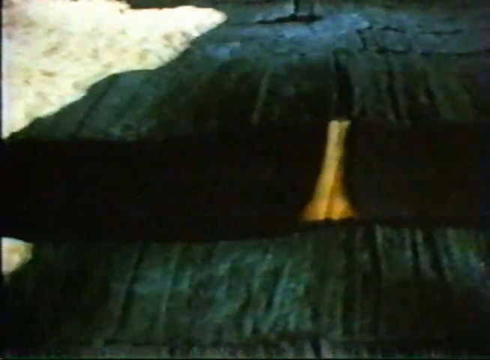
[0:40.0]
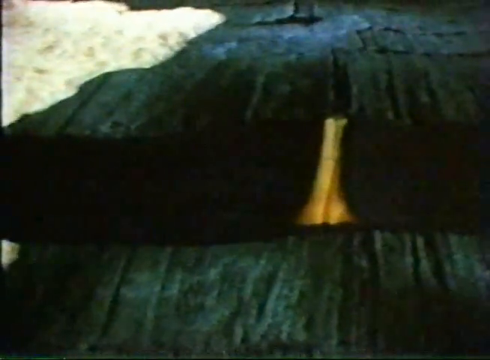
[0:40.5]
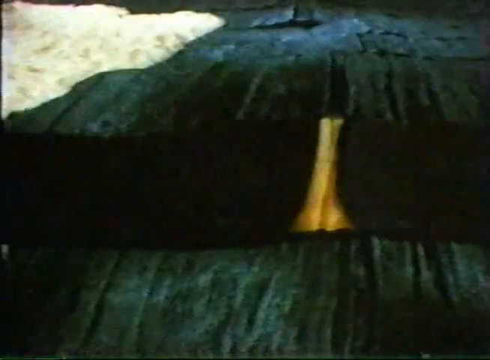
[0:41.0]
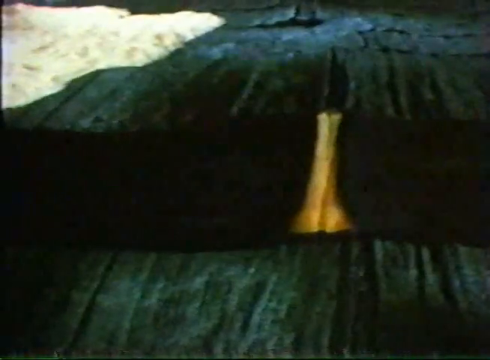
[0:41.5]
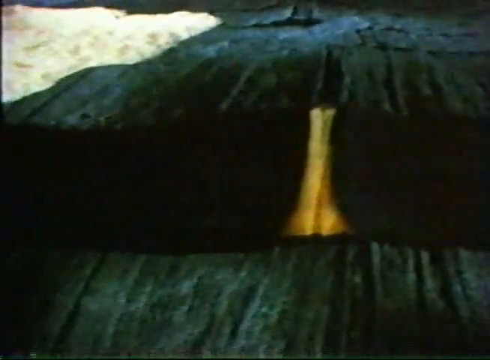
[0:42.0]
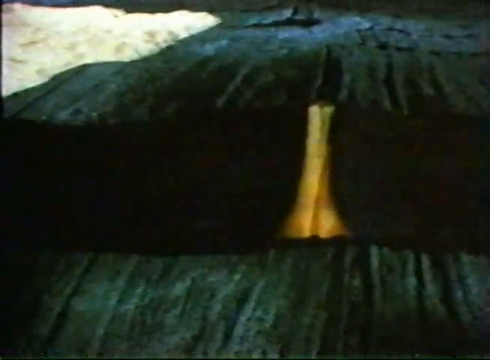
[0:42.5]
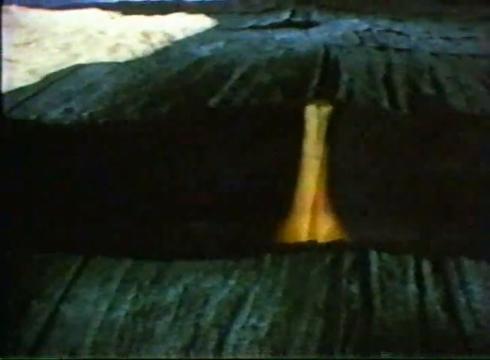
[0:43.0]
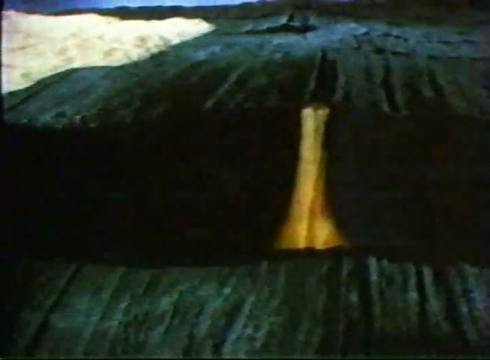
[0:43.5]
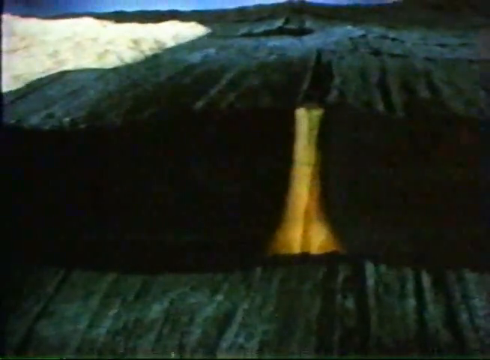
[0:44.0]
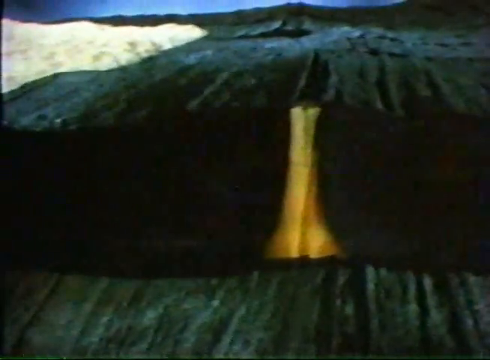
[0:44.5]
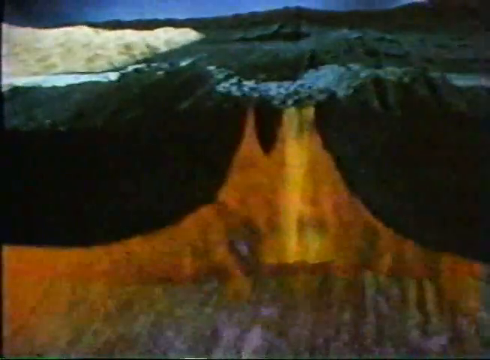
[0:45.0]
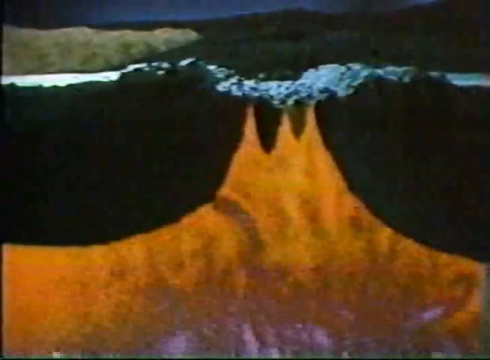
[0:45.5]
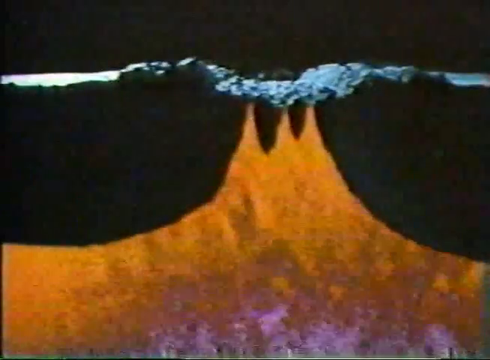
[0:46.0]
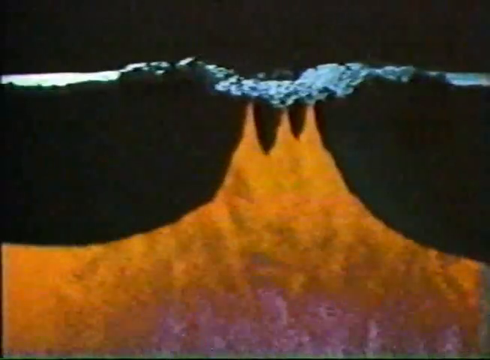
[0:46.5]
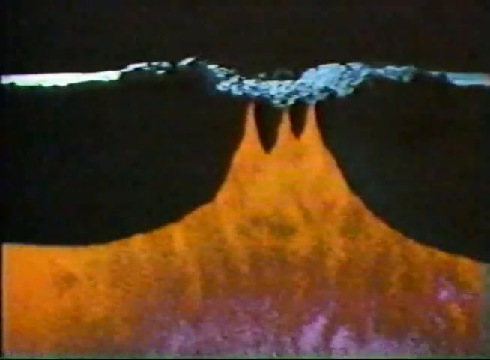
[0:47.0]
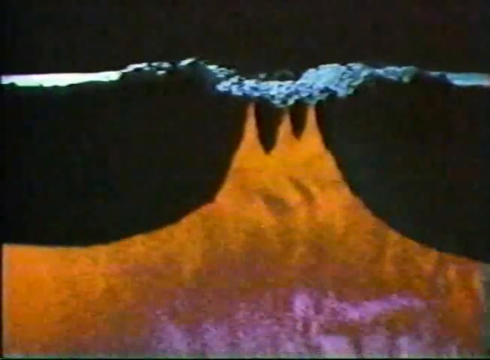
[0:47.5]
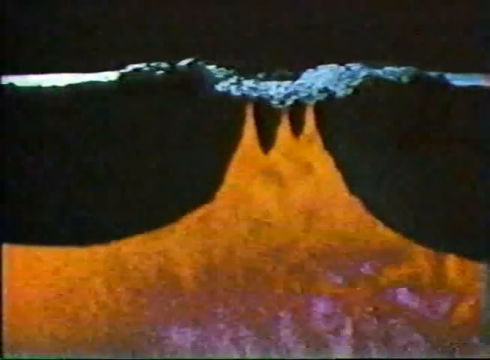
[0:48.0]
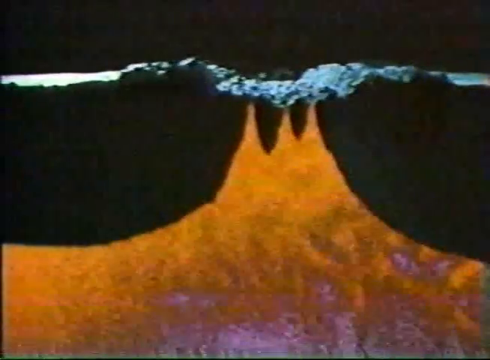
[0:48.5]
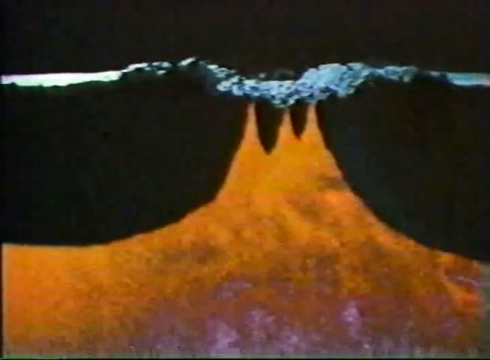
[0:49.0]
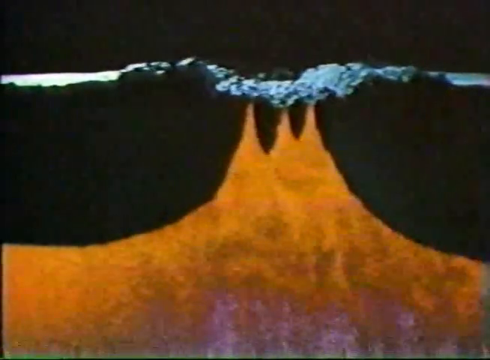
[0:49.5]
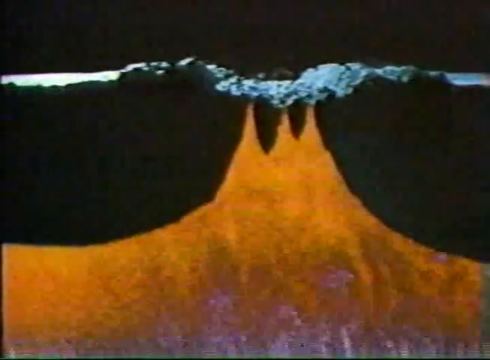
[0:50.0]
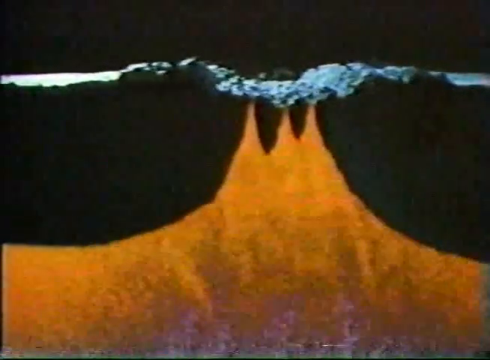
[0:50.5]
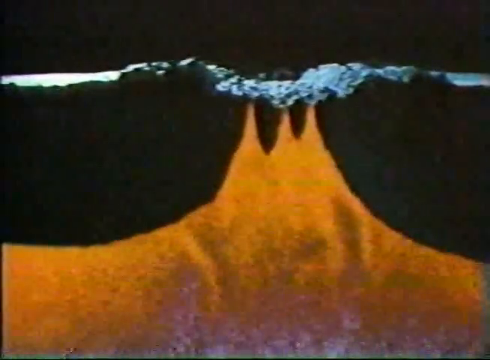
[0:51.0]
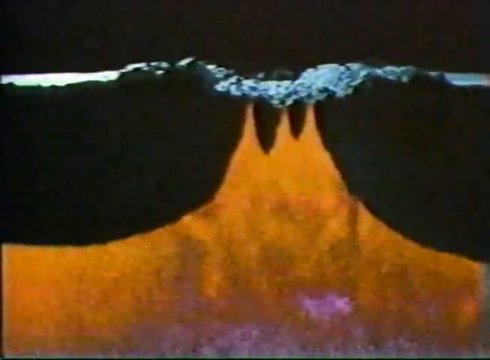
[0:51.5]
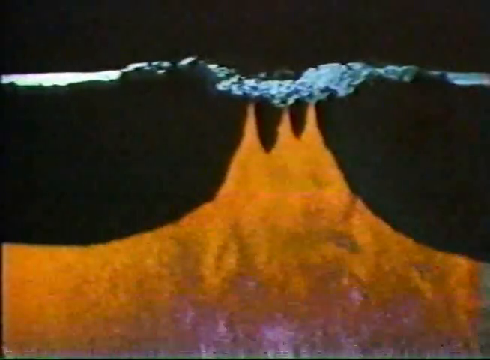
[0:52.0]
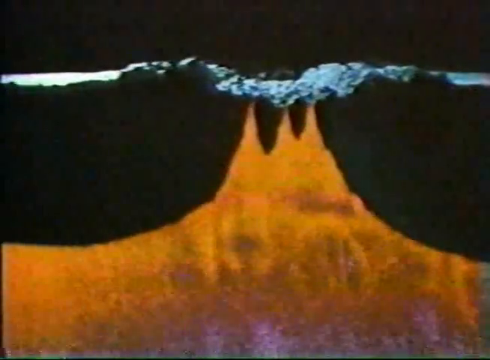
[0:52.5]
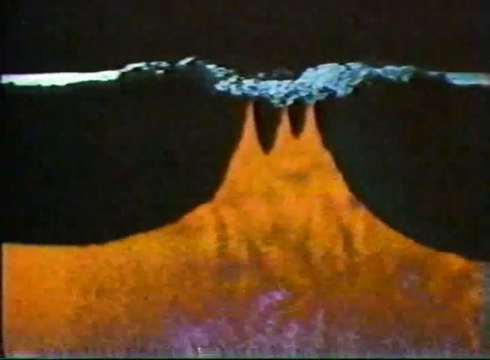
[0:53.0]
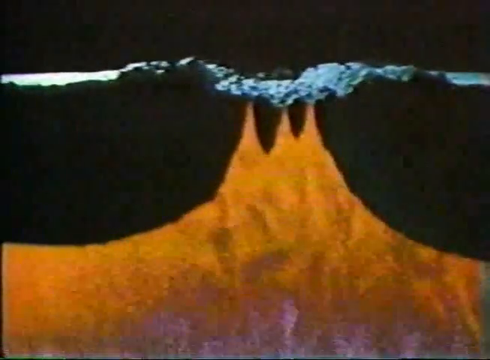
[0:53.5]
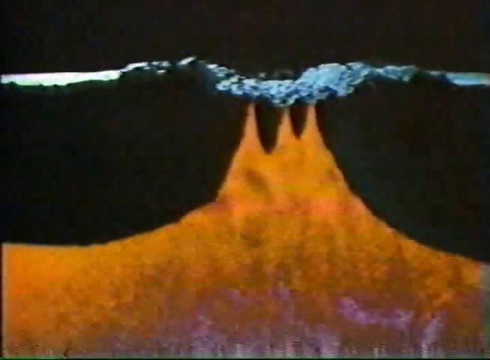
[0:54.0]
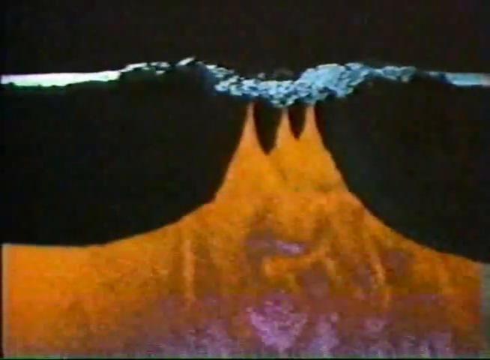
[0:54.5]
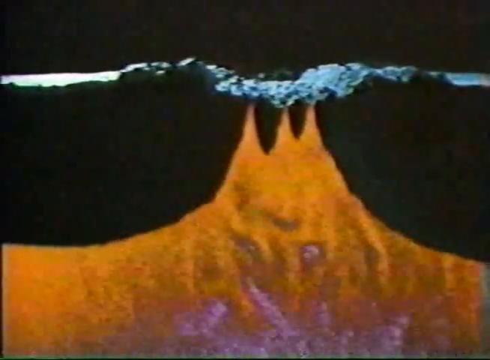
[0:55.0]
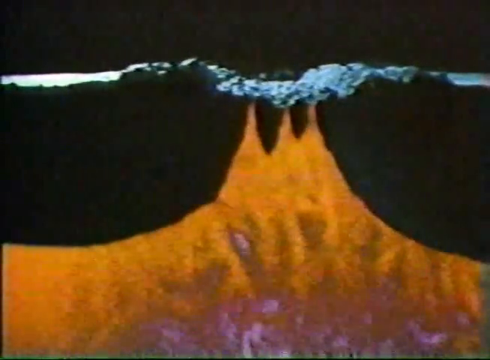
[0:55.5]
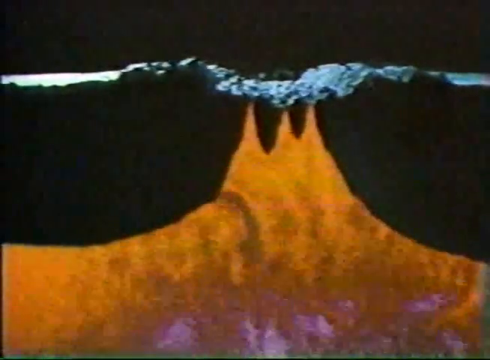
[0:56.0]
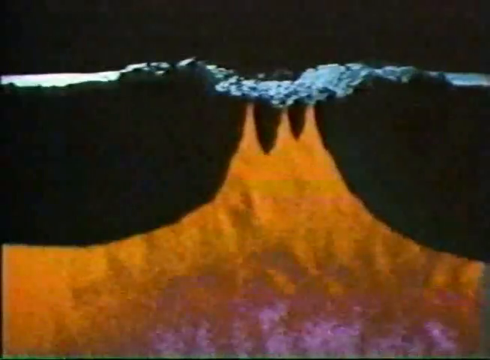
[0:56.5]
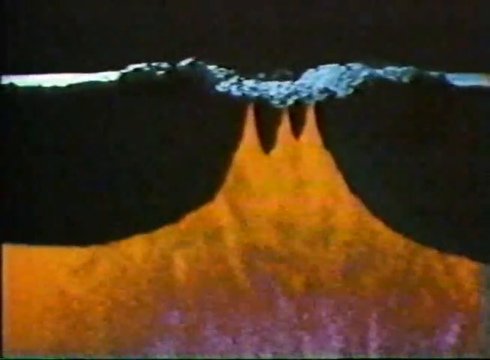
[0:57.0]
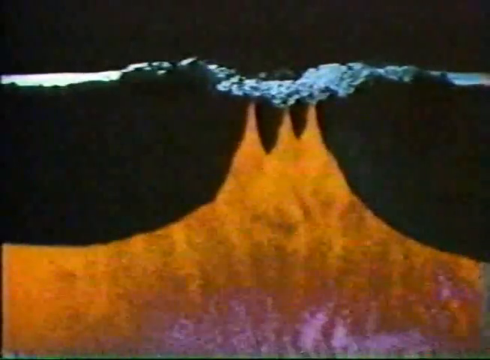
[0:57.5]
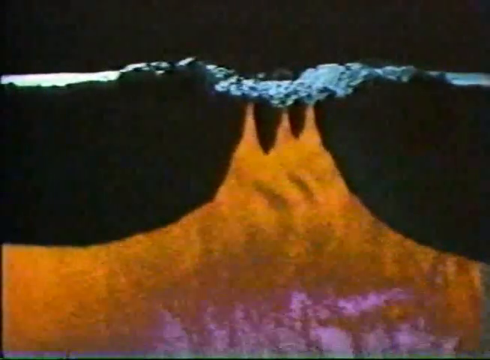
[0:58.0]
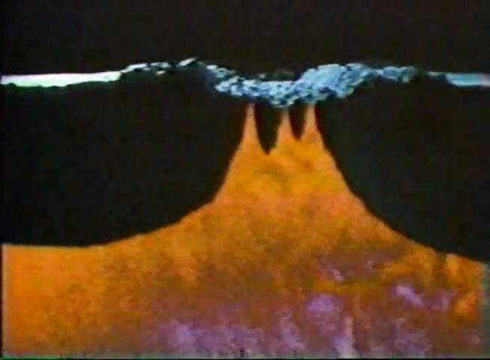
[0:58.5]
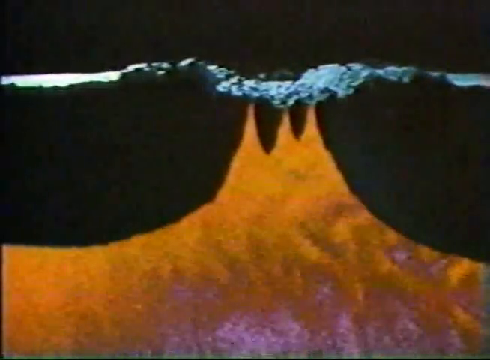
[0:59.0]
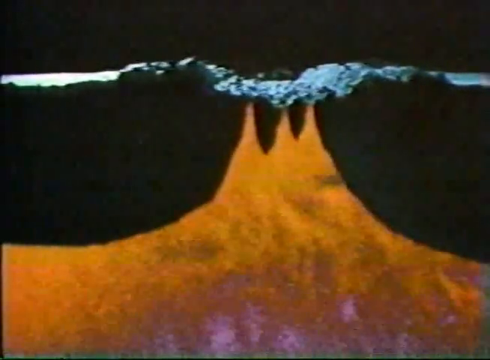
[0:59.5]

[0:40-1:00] The gold thing keeps coming out of the cut. As more of it emerges, it looks like a flame or an erupting volcano: below there are purple flames, and the orange part acts like a flame, with three points pointing upward. The background is very dark black and almost like a surface. On top there is something like a mountain, with a little sunlight on top of it. The flames are dark colored and the background is very dark. The place looks like a volcano erupting; the visuals keep changing without showing clearly what it is. The black textured part might be a mountain.